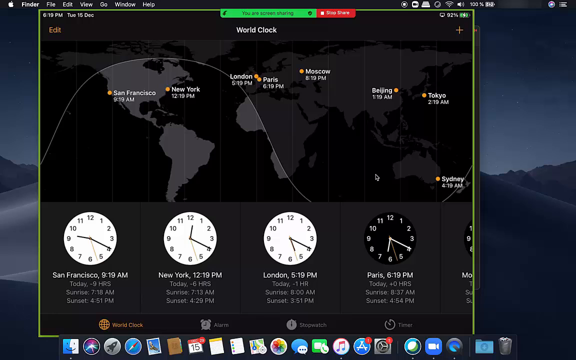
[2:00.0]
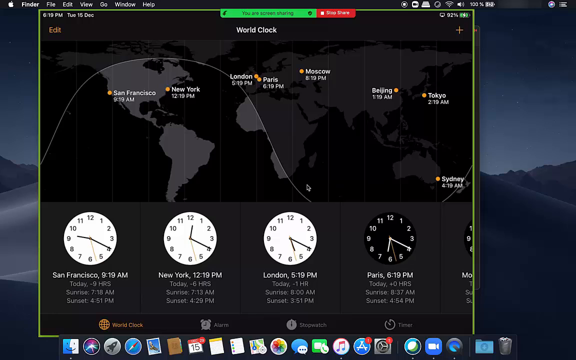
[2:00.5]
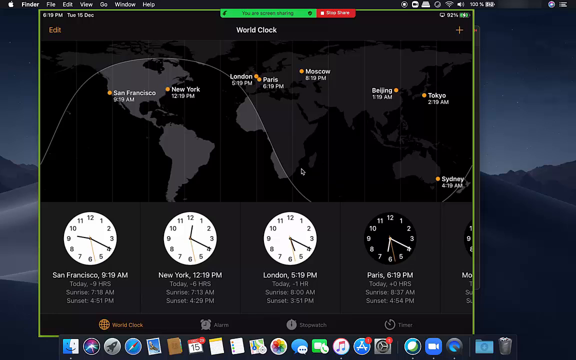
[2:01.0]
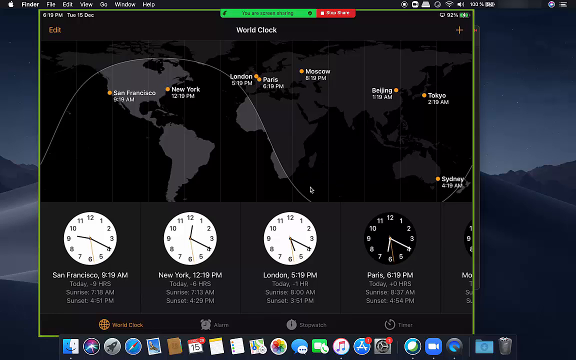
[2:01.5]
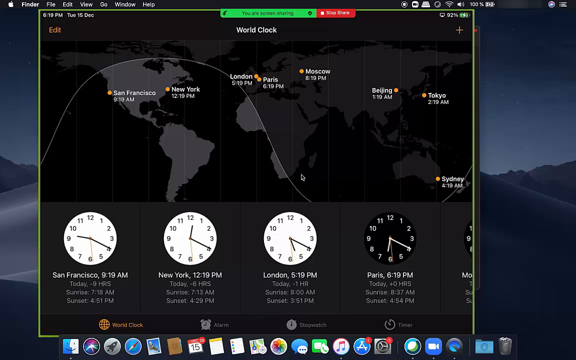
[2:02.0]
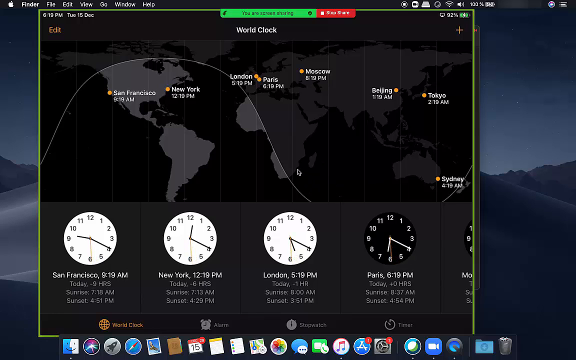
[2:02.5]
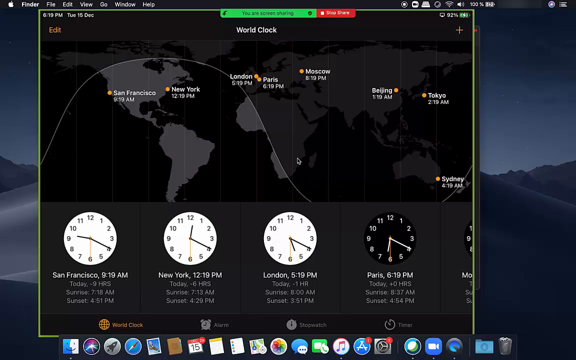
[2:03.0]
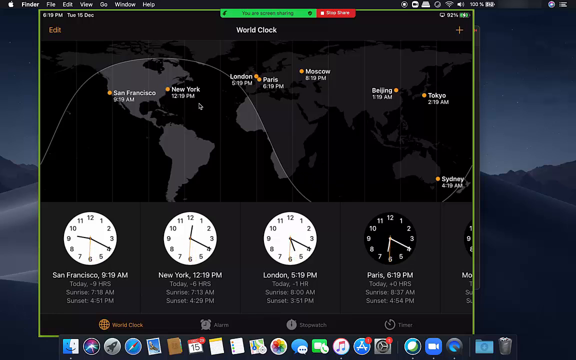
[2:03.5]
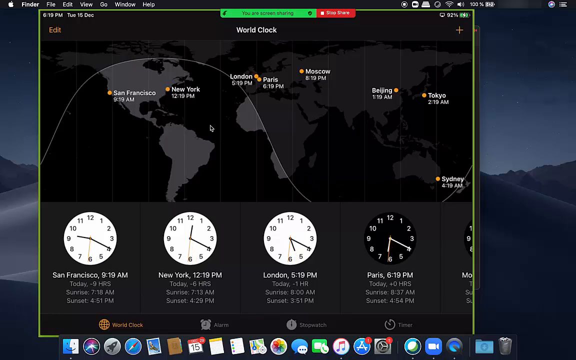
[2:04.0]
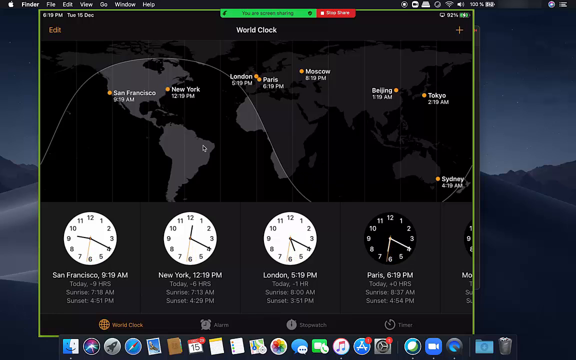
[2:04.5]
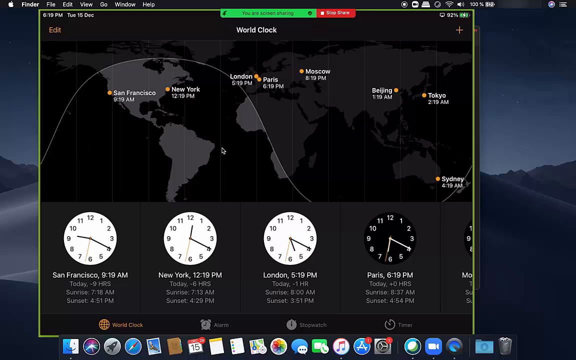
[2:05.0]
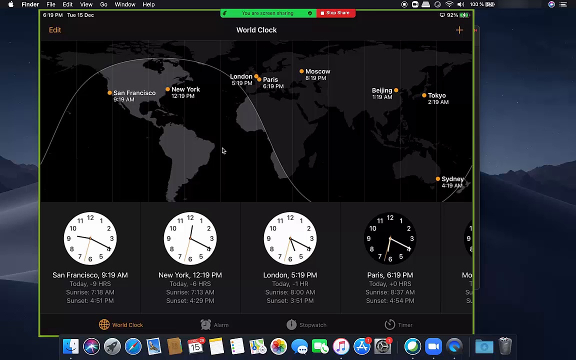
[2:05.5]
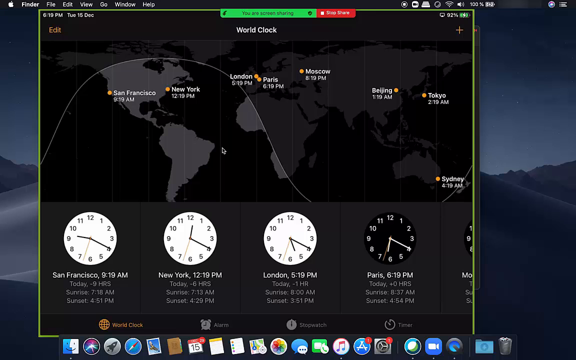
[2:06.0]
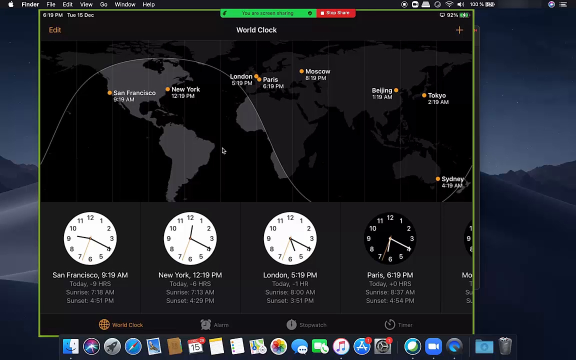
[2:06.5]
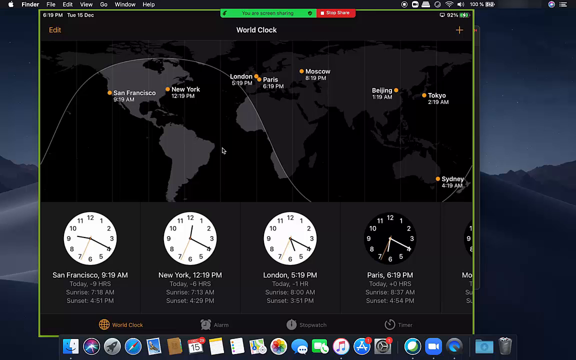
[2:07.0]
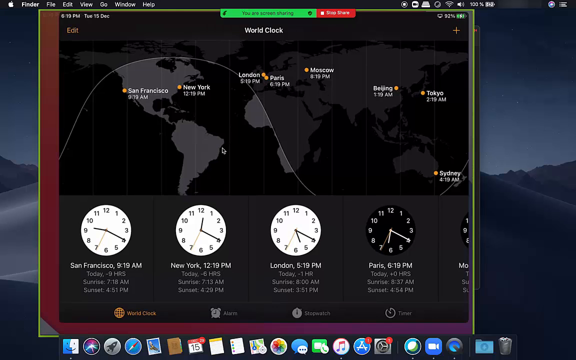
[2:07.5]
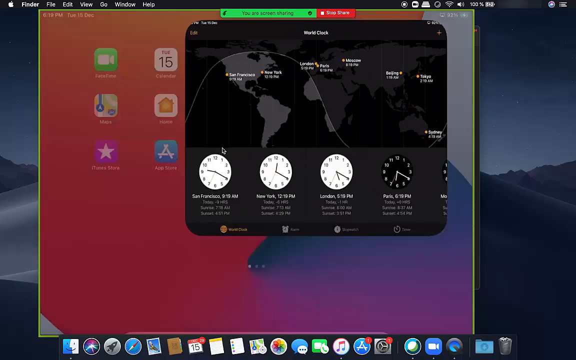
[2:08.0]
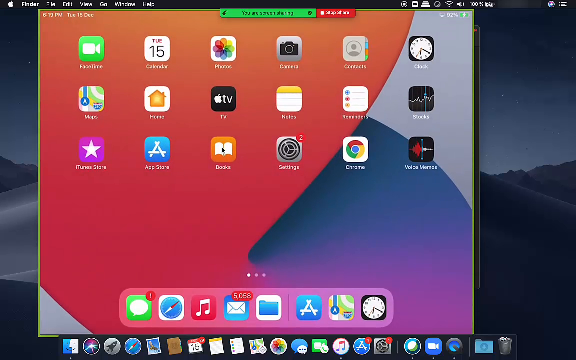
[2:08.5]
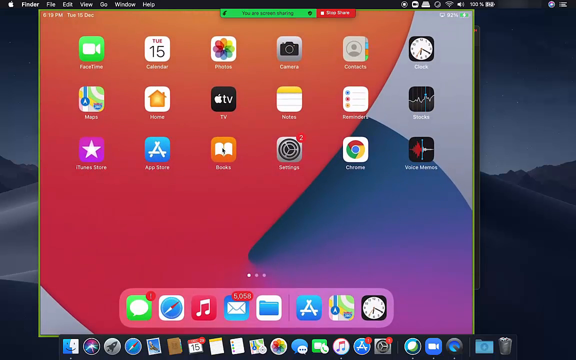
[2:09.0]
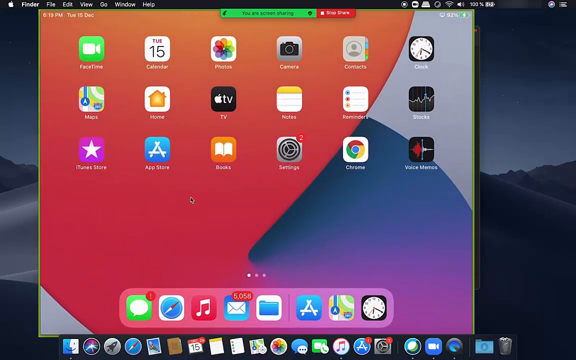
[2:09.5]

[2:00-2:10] The world clock is shown with several locations: San Francisco, New York, London and Paris on the bottom, with the times in round clocks. It has a picture of something large that almost looks like a mountain. Outside of it, Moscow, Beijing, Tokyo and Sydney are also highlighted, with little orange dots next to each name. "World clock" is written in the upper part of the screen. Above that is a green horizontal box, as well as a red box that apparently says "New York". The cursor clicks off, and the pop-up retracts back into the world clock icon.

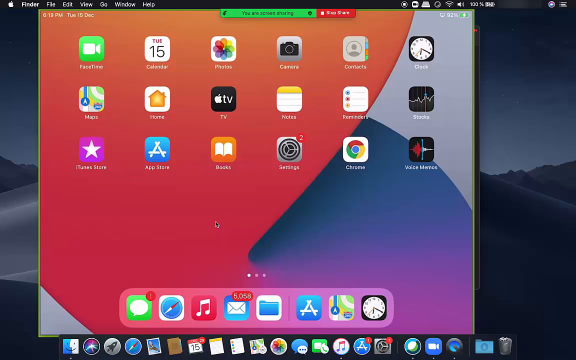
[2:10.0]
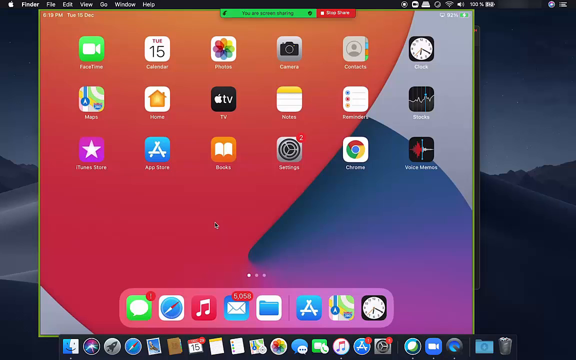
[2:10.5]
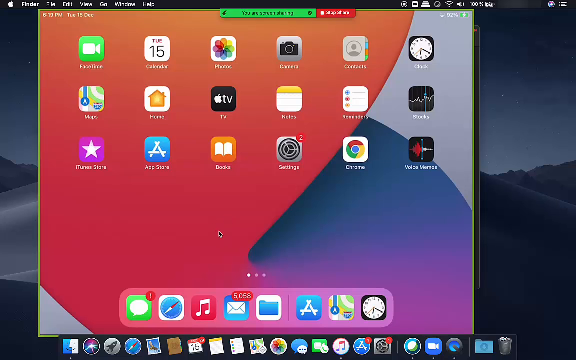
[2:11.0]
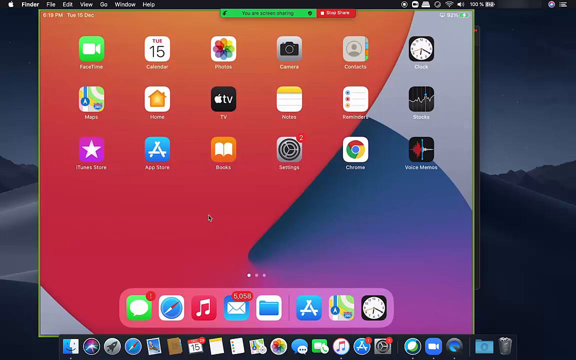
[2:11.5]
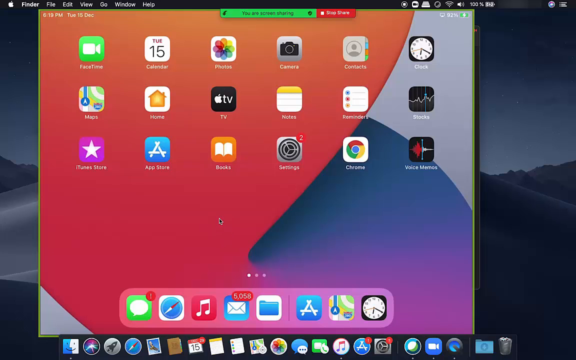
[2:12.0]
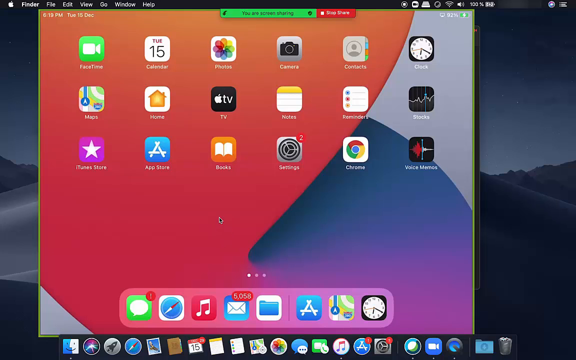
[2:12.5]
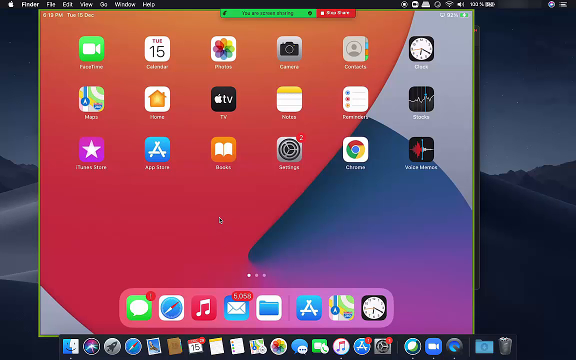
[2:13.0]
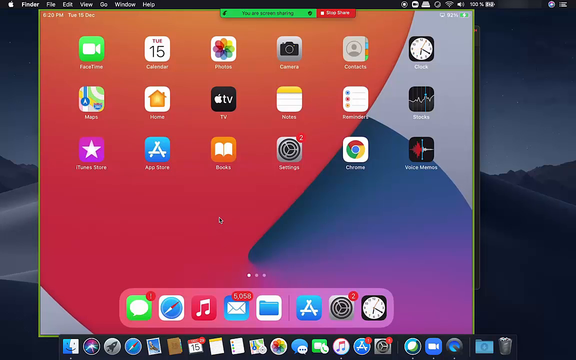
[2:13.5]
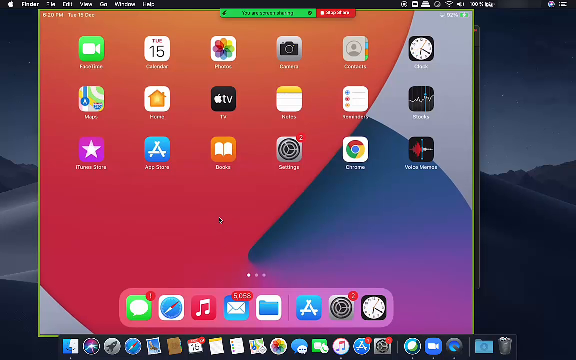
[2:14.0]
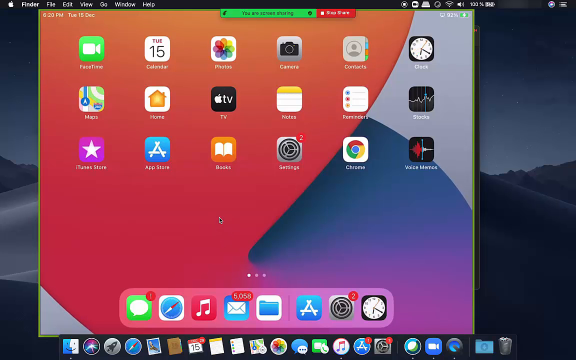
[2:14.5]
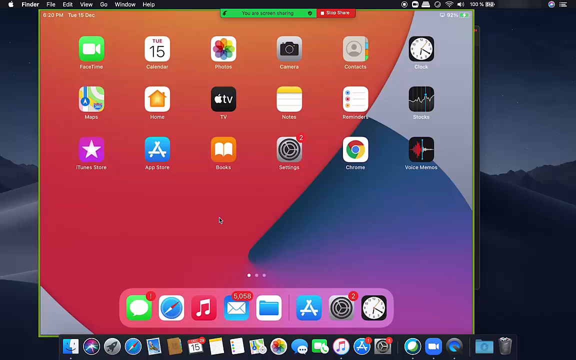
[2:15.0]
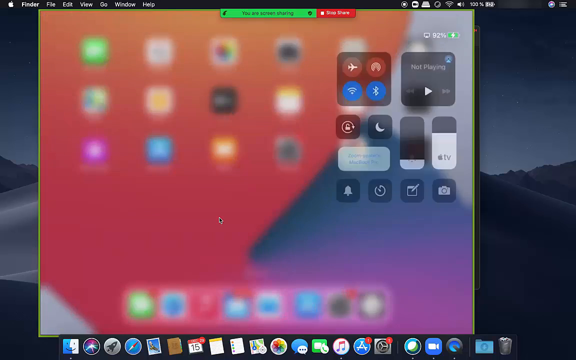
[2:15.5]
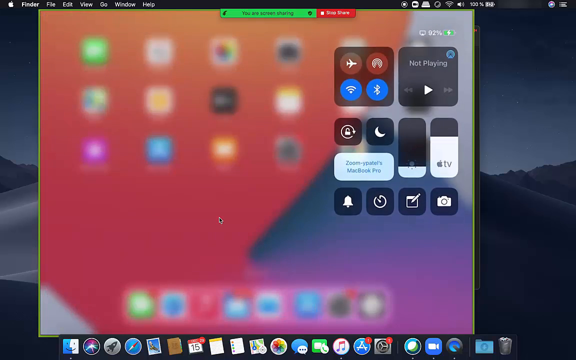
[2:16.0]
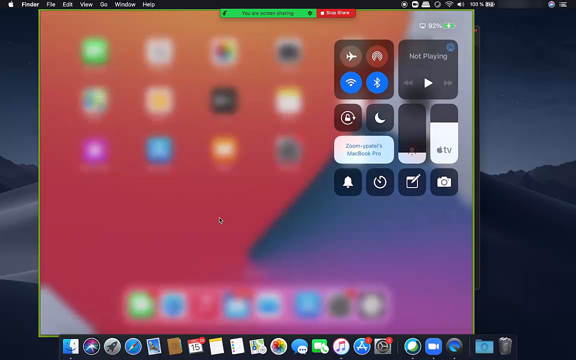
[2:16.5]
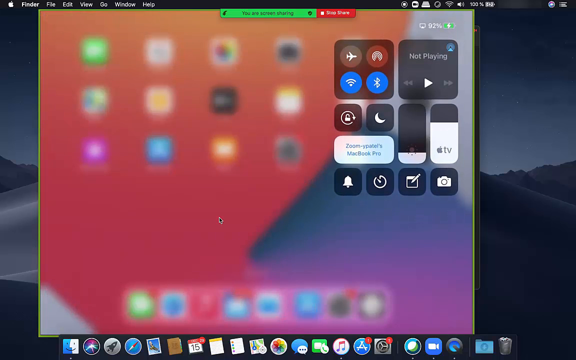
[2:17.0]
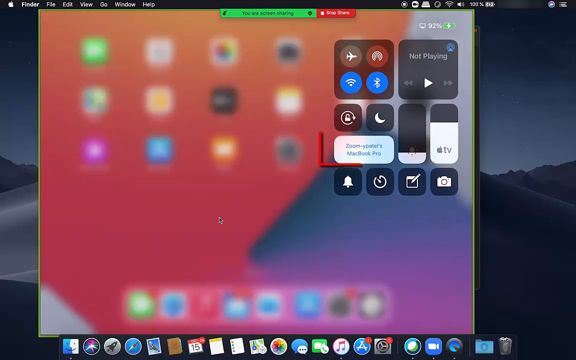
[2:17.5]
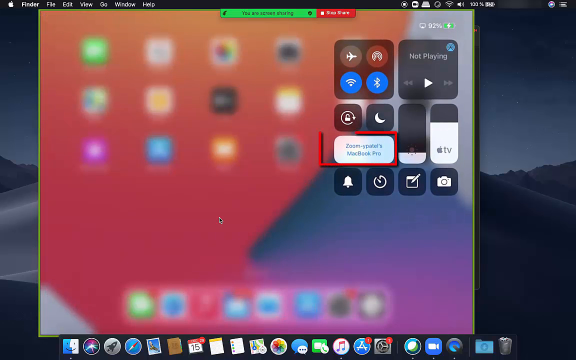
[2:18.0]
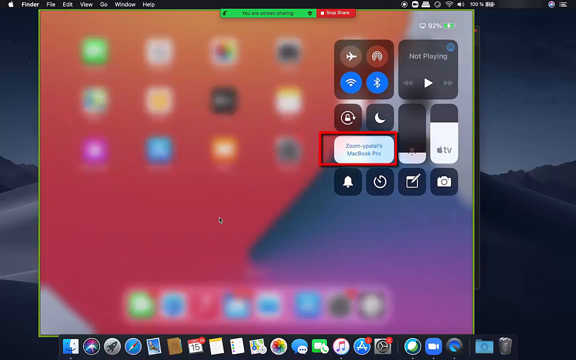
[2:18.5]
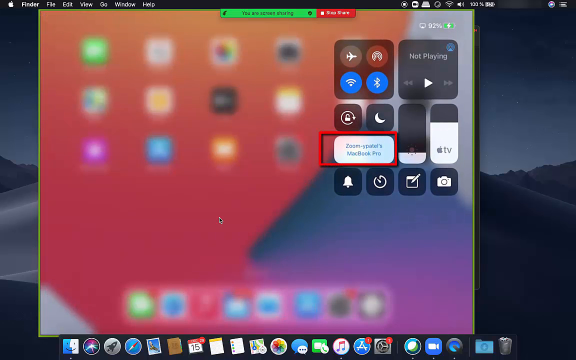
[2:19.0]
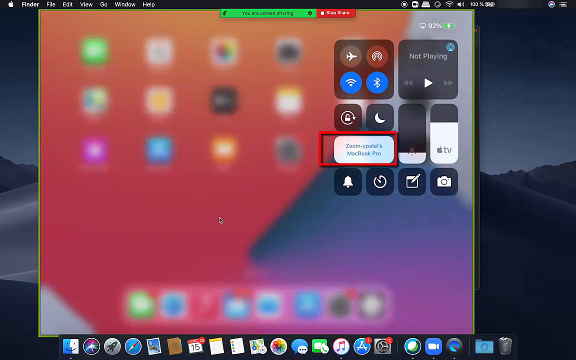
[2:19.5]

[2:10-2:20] A page with several computer icons is shown. The cursor moves, and suddenly a pop-up appears containing airplane mode and showing different symbols. A blue outline is drawn around one of the icons and then disappears. A multicolored page then shows icons such as maps, photos, camera, world clock and notes, standard icons found on iPhones and computers. Along the bottom are icons including messaging, Safari, Apple Music, email, the App Store, maps and the world clock. Behind them is the dark screensaver of the very smooth sand mountain.